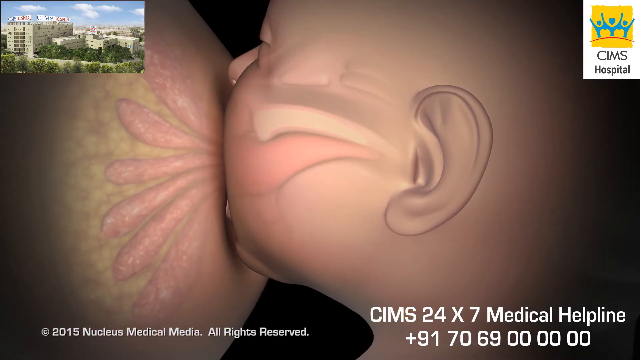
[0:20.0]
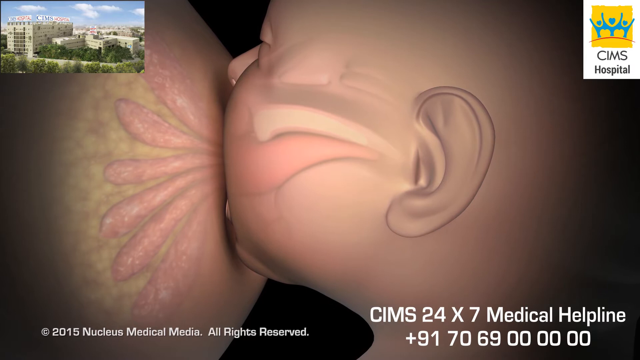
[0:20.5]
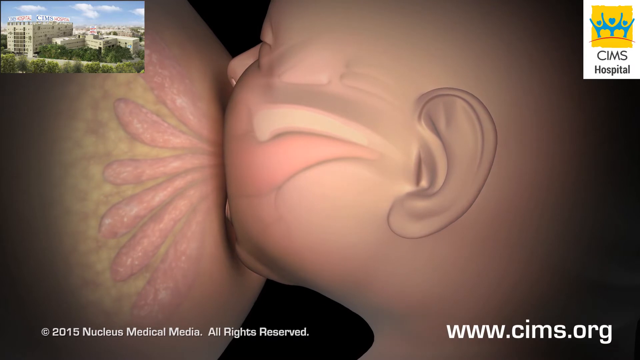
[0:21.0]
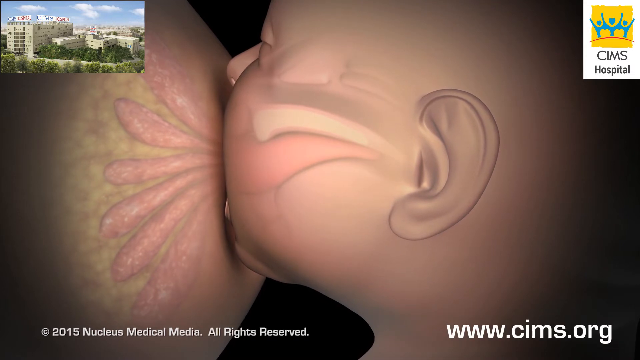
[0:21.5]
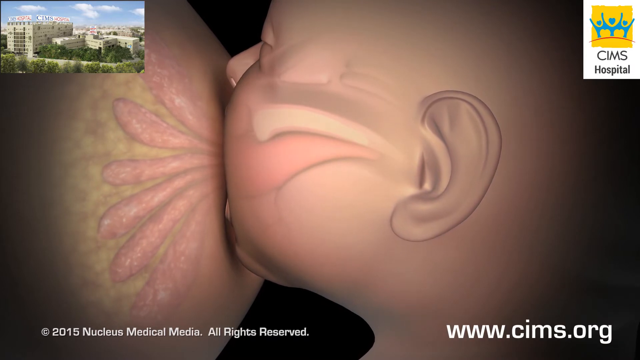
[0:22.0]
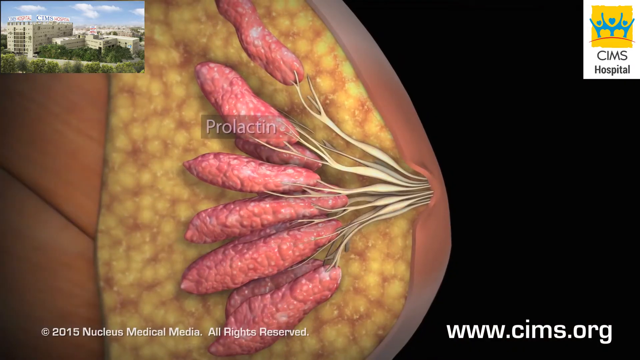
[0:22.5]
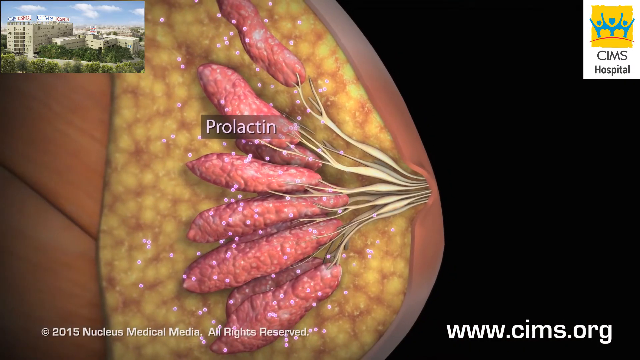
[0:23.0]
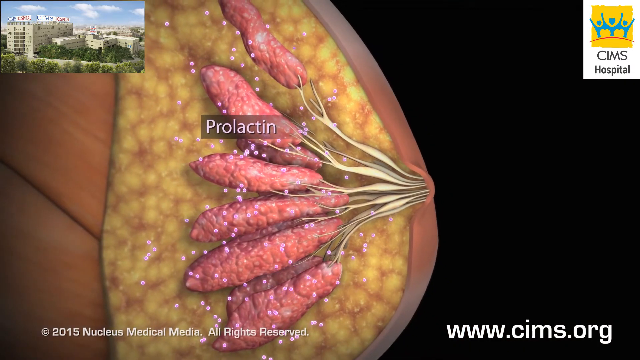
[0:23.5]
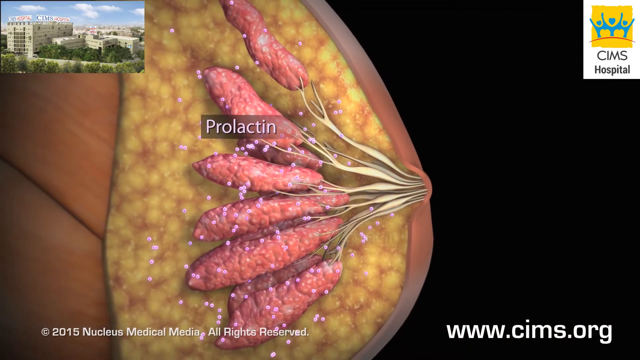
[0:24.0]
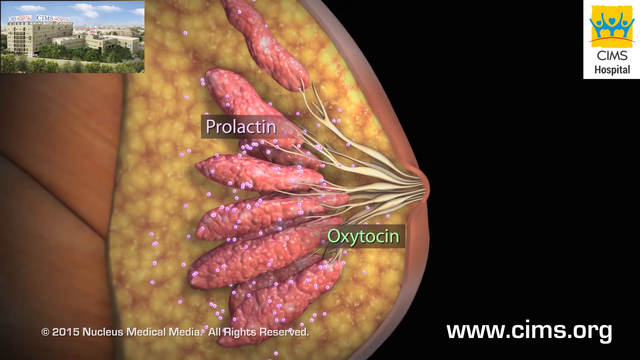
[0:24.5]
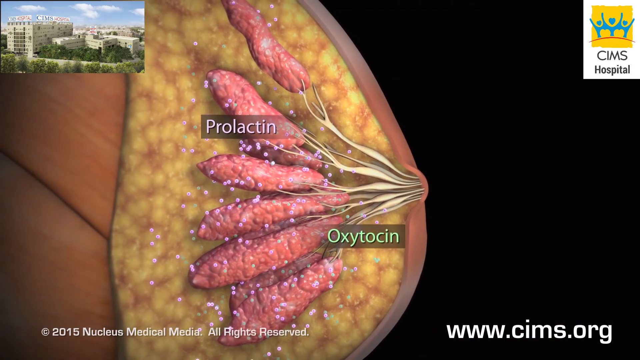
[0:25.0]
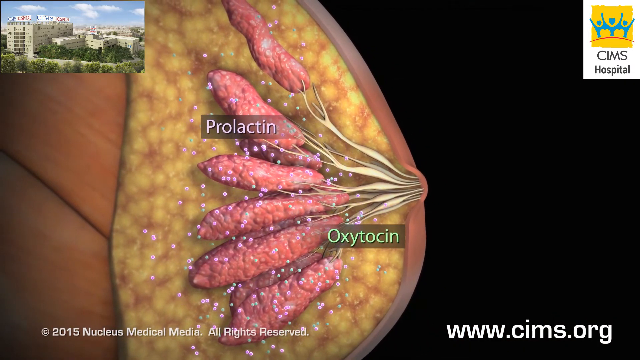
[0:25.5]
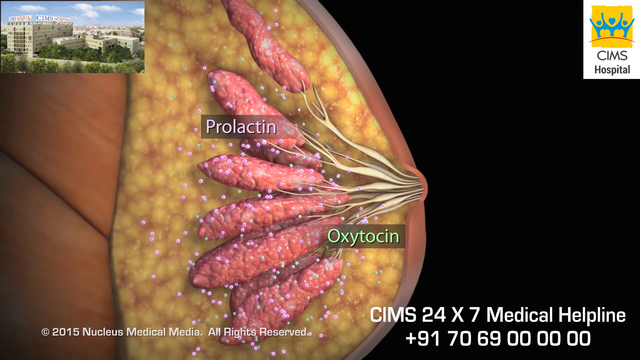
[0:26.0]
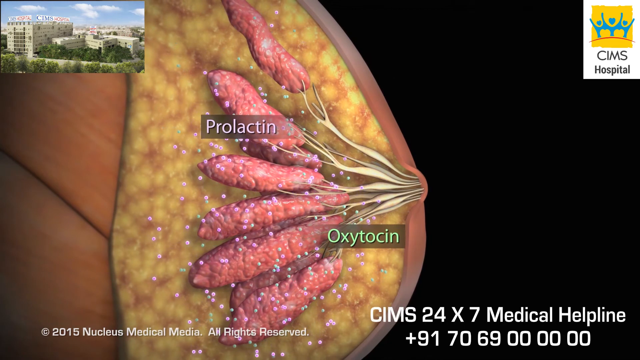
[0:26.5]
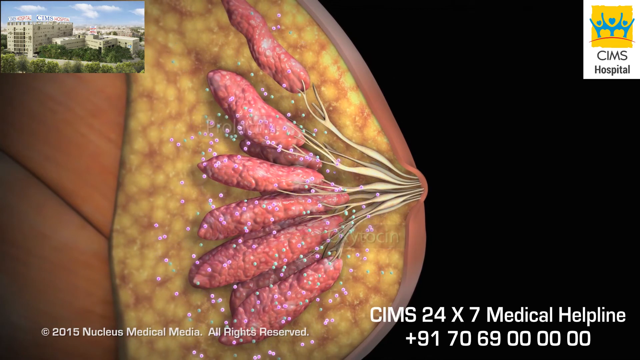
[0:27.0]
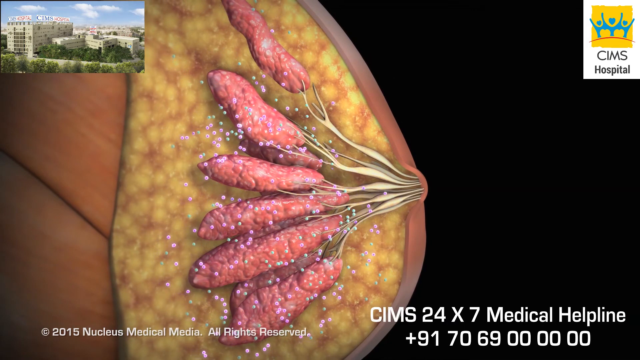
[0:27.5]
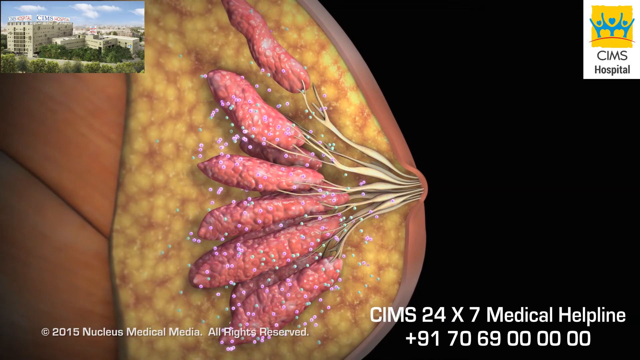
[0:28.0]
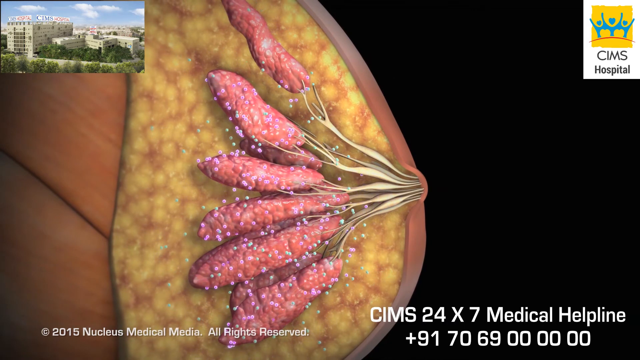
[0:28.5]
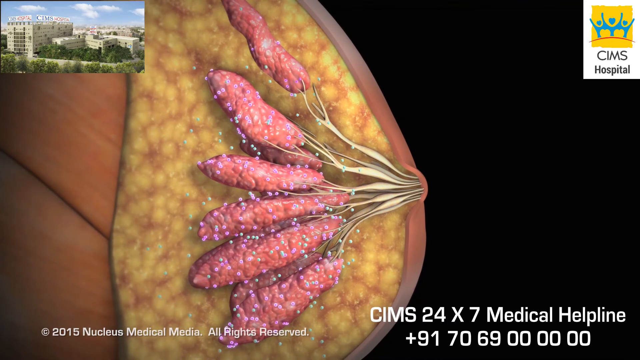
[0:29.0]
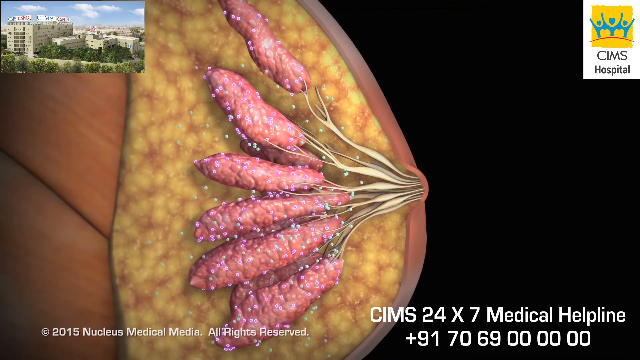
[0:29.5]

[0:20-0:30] The illustration shows the anatomy of a lactating woman whose body is producing milk in her mammary glands. The milk flows from the mammary glands to the milk ducts, and from the milk ducts the baby suckles the breast and drinks the milk. The hormone prolactin is presented as what helps the mother's body produce the milk.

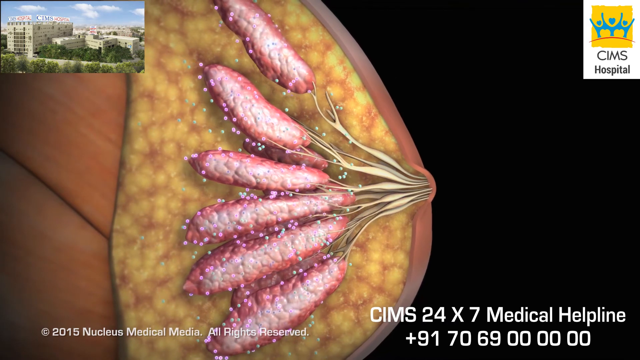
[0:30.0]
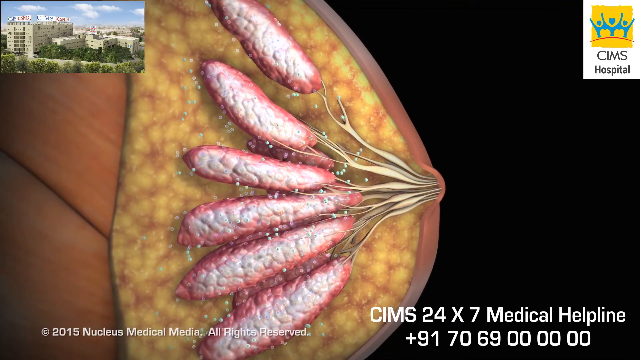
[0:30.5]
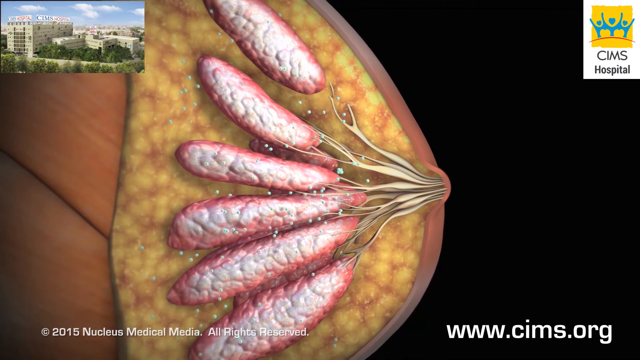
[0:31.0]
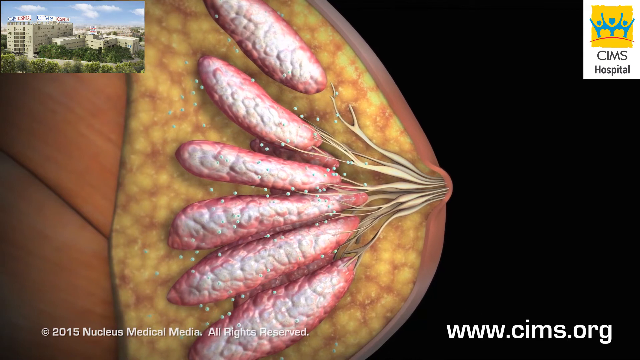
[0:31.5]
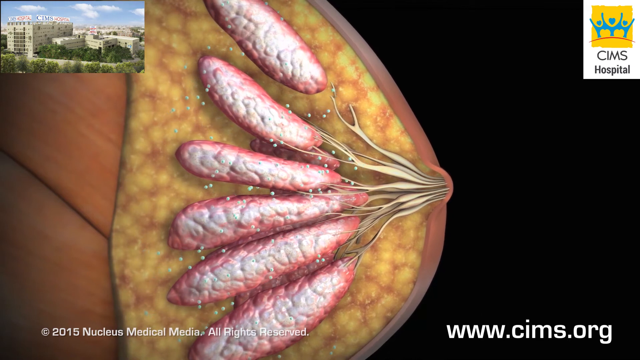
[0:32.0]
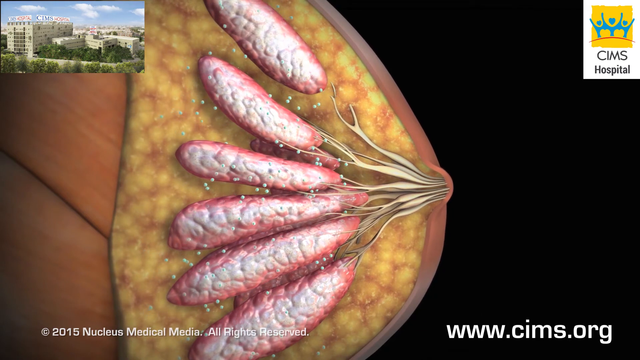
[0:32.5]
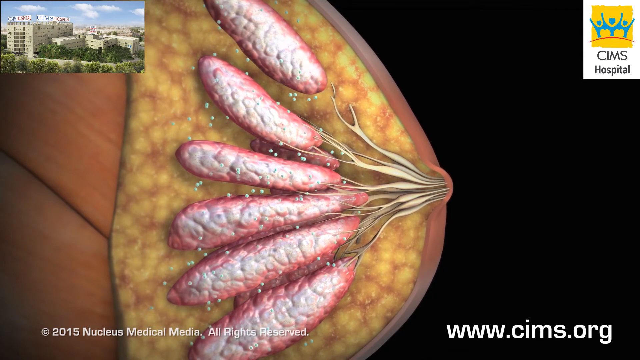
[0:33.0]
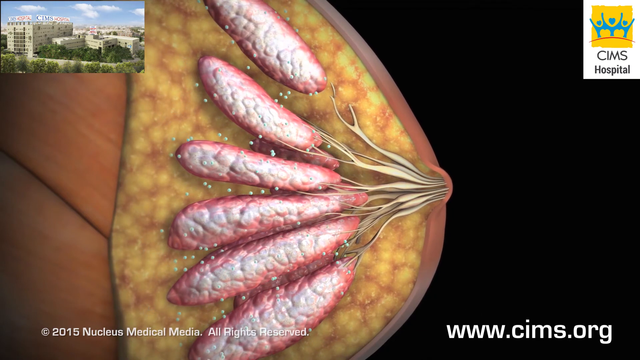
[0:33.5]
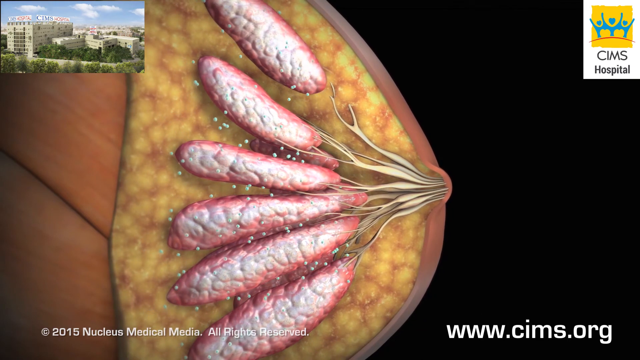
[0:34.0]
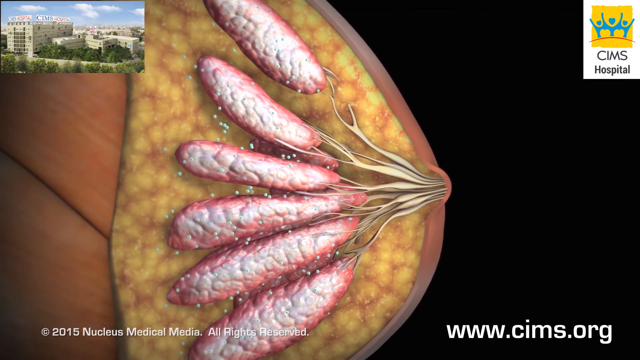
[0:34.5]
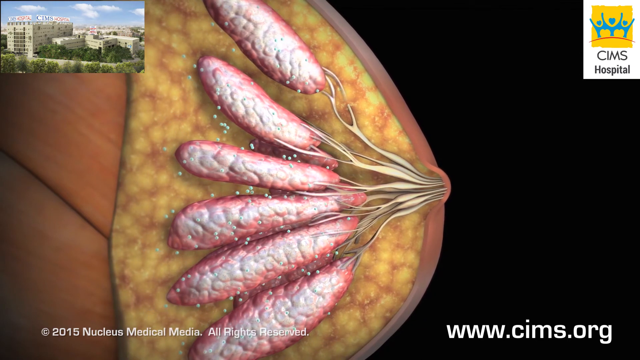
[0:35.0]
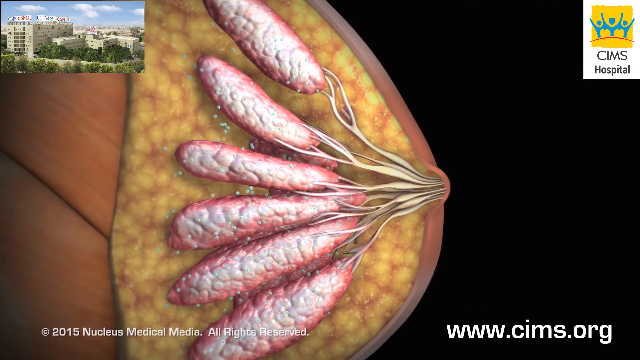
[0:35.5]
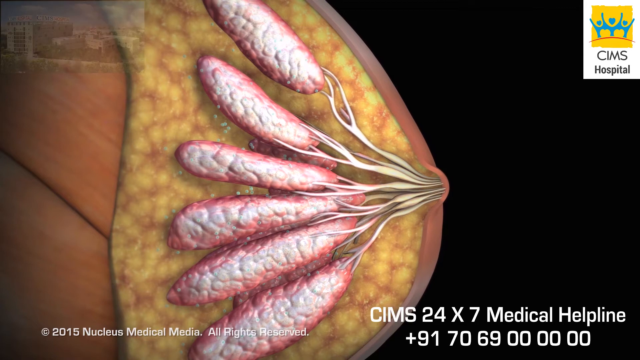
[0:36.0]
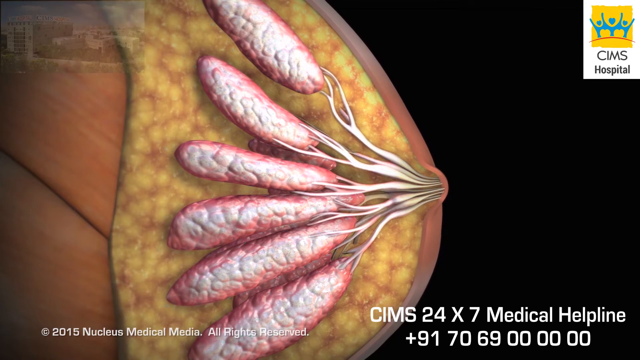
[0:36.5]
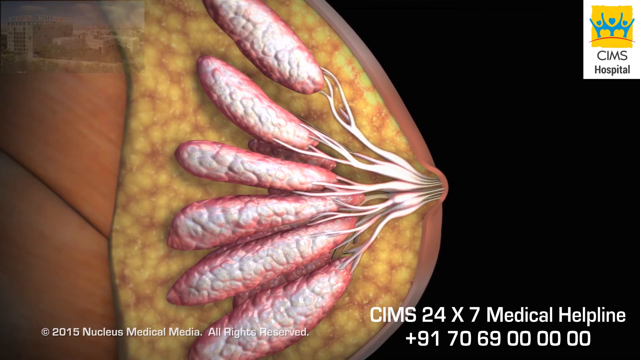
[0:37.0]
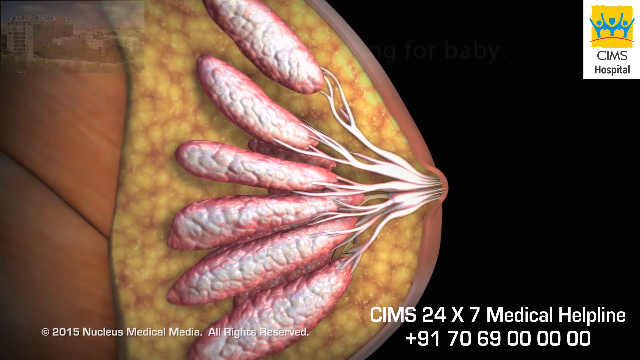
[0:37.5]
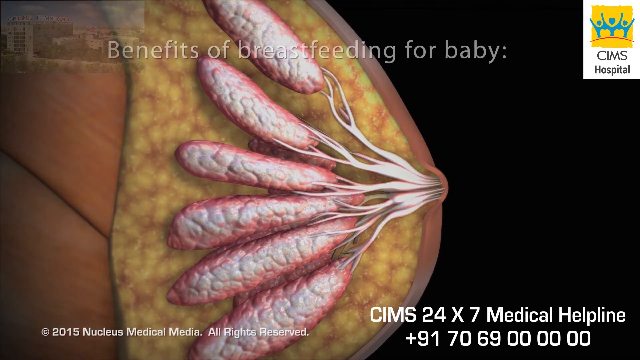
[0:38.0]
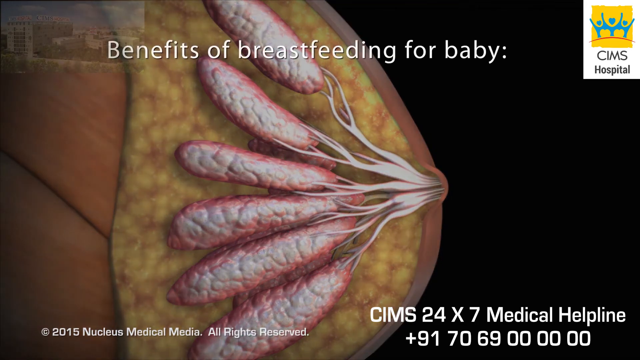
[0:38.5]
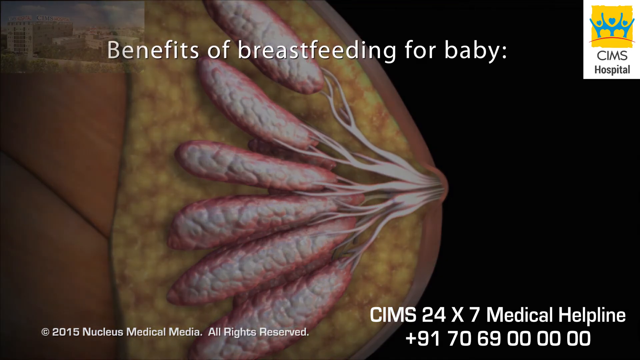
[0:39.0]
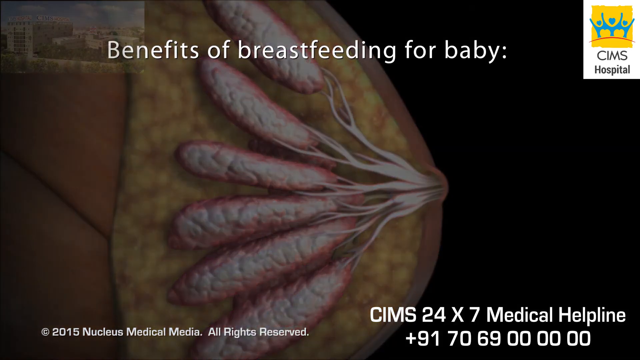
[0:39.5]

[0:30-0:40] The 3-D illustration shows the mother's body producing milk through the hormone prolactin, with the mammary glands expanding and filling up with milk during the prolactin release. Next, oxytocin moves the milk from the mammary glands to the milk ducts at the front of the breasts, positioning it for the baby. As the video progresses, the 3-D model moves to give a better view of the milk production process.